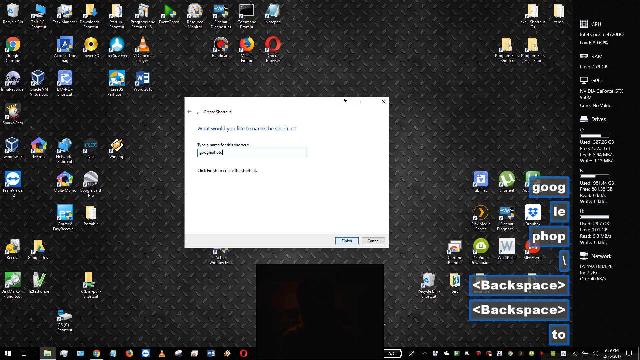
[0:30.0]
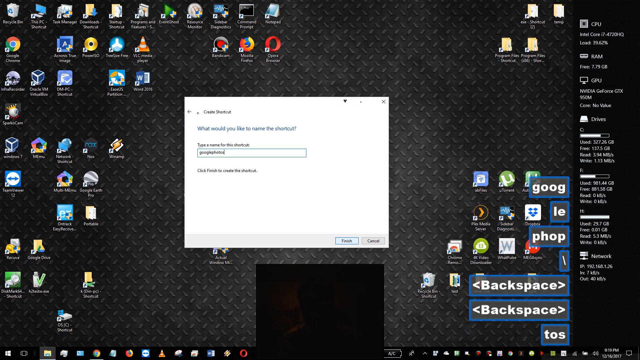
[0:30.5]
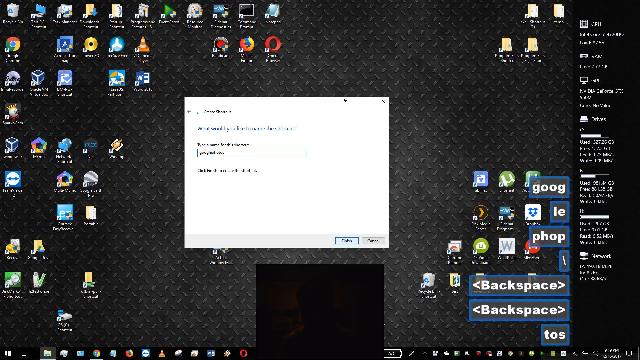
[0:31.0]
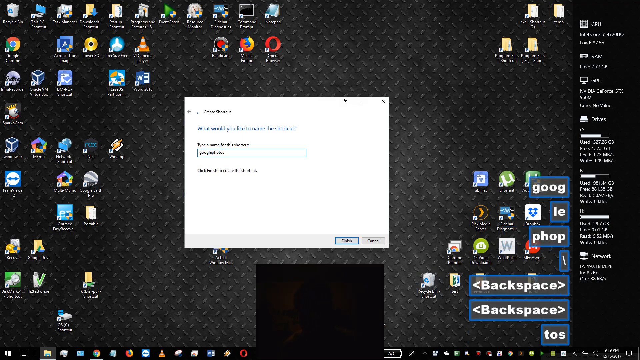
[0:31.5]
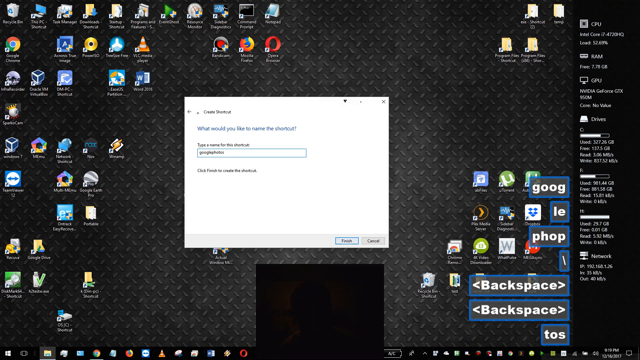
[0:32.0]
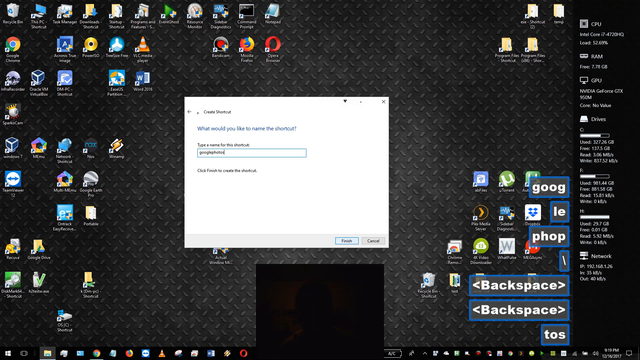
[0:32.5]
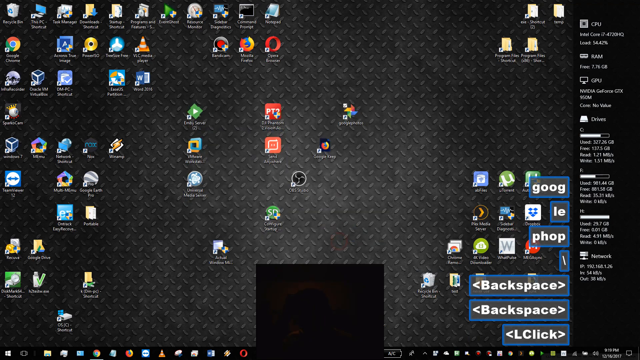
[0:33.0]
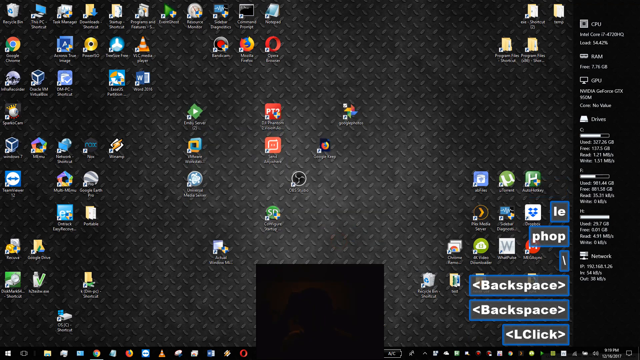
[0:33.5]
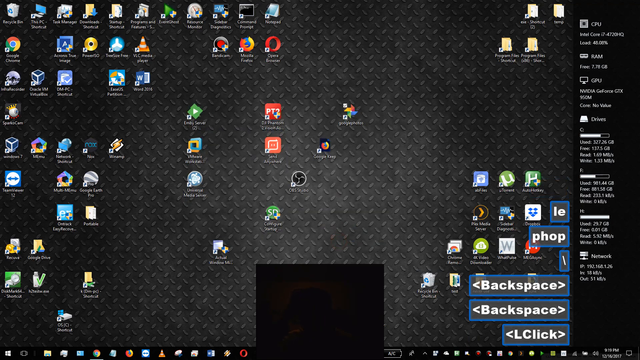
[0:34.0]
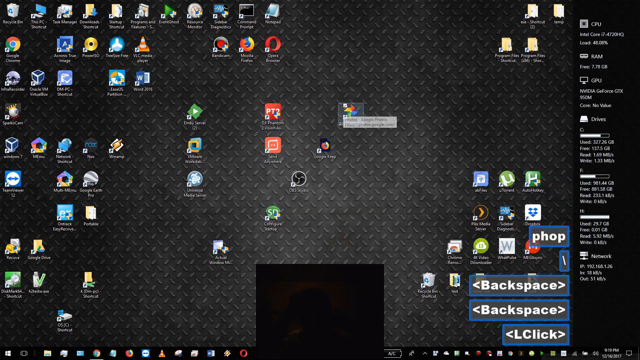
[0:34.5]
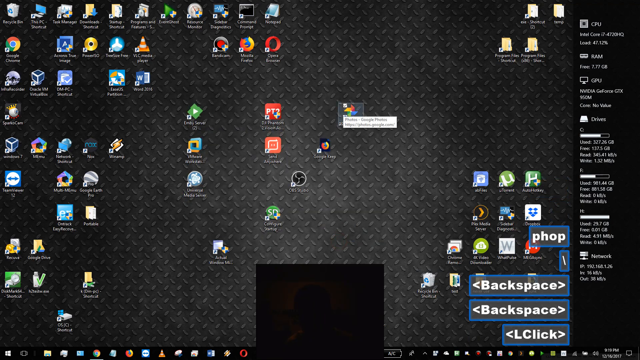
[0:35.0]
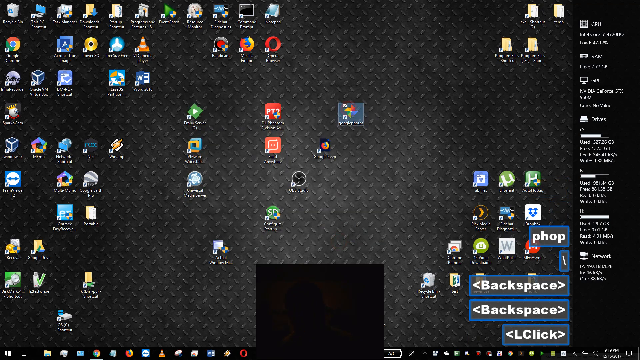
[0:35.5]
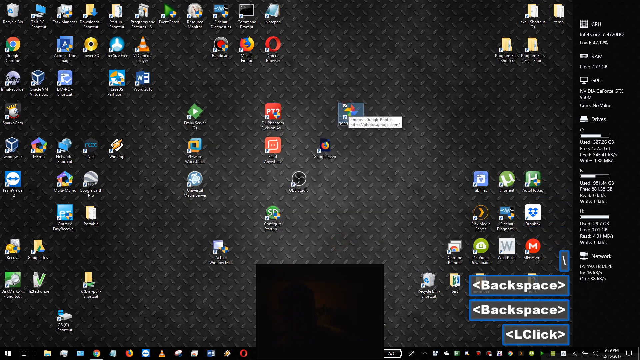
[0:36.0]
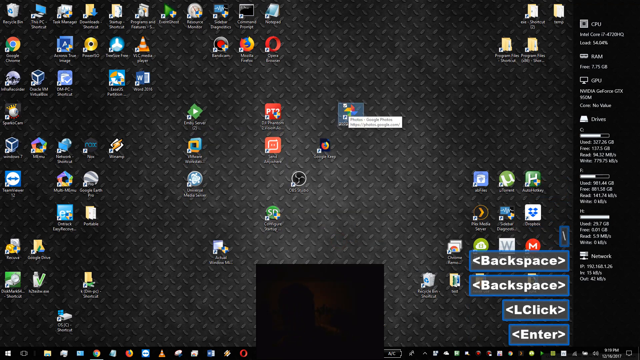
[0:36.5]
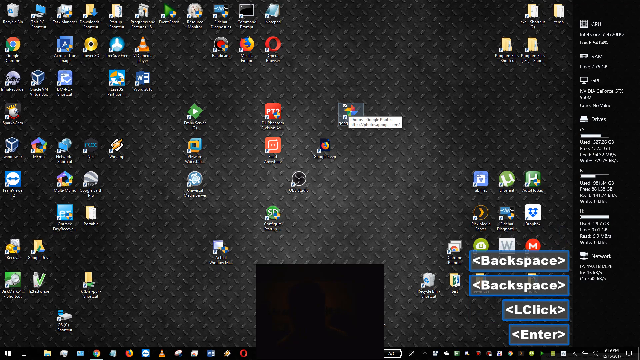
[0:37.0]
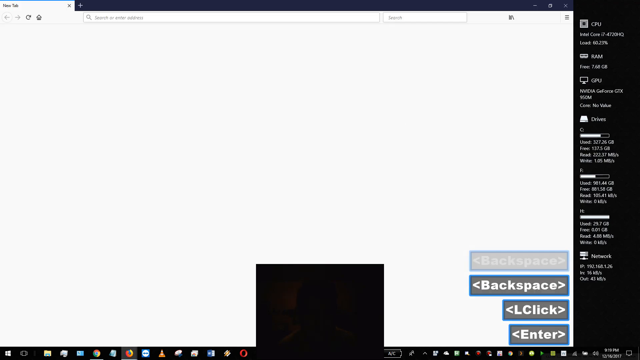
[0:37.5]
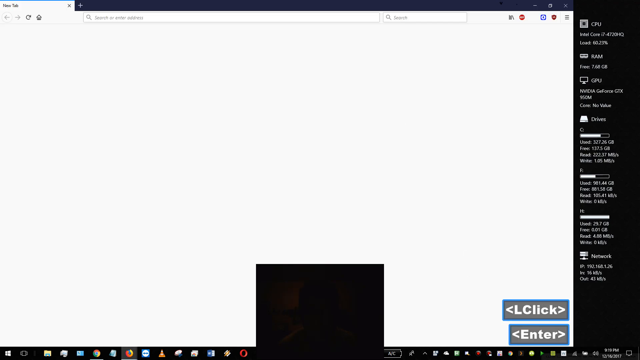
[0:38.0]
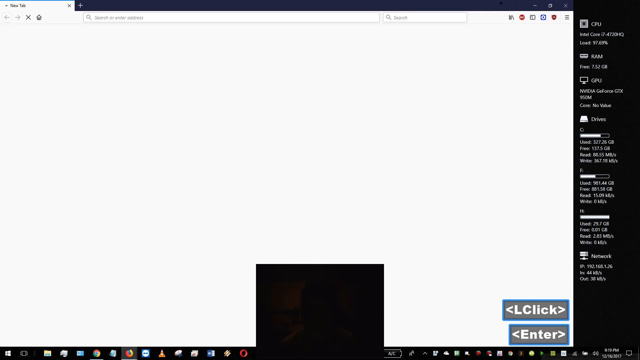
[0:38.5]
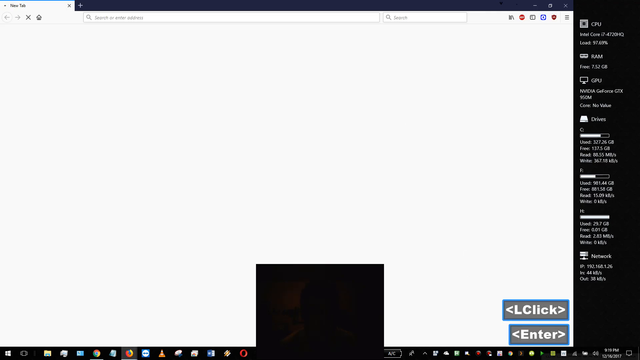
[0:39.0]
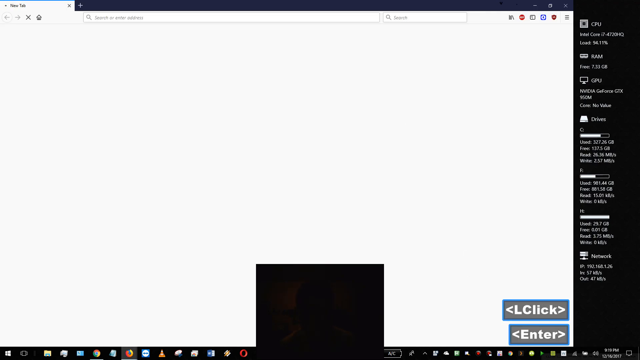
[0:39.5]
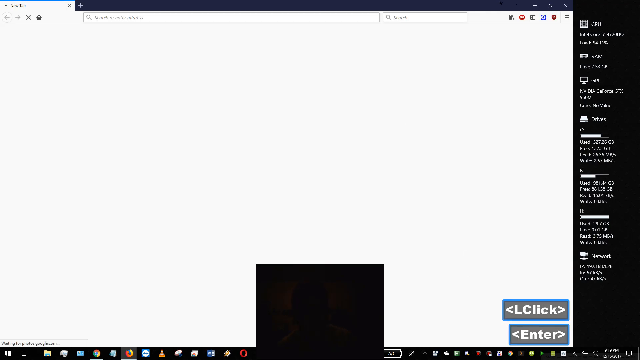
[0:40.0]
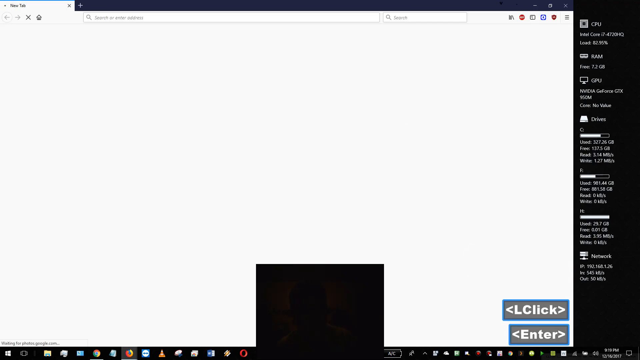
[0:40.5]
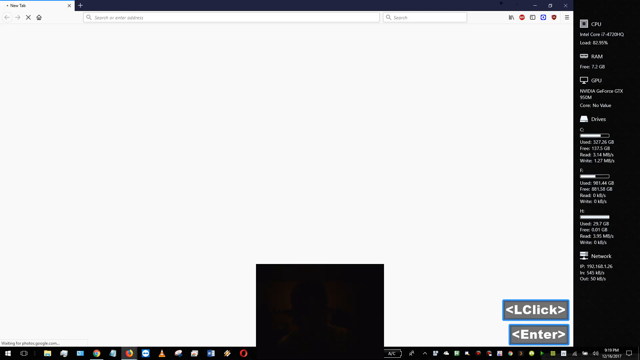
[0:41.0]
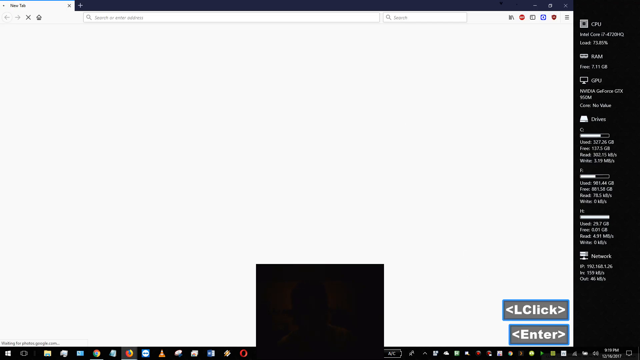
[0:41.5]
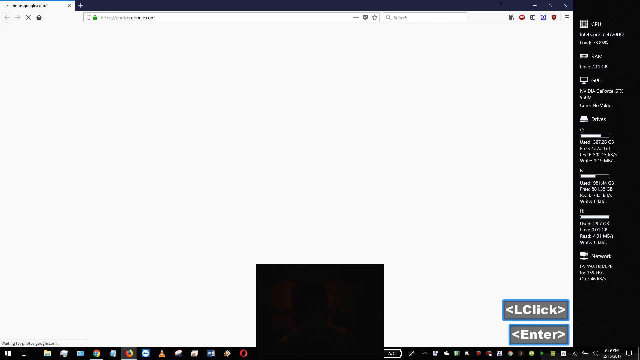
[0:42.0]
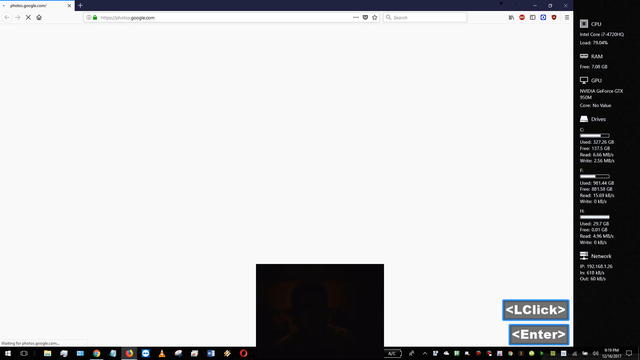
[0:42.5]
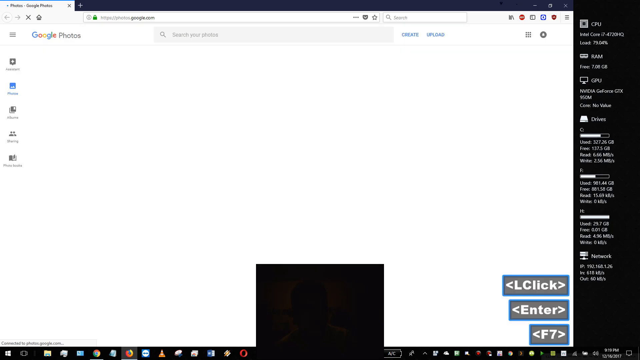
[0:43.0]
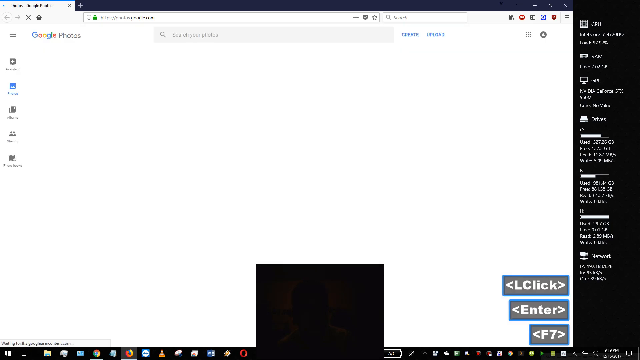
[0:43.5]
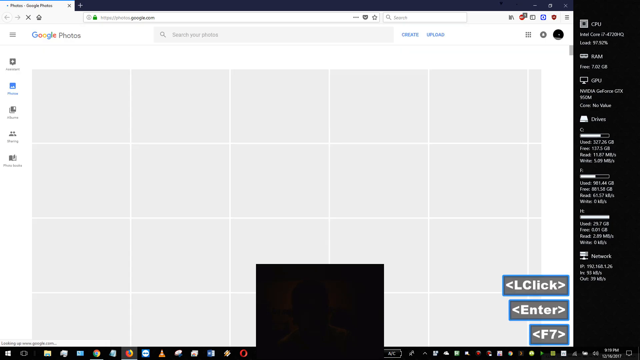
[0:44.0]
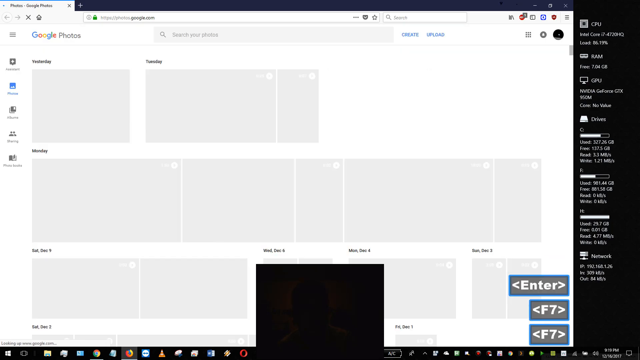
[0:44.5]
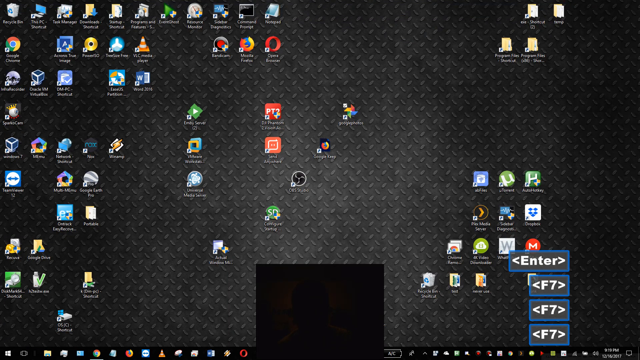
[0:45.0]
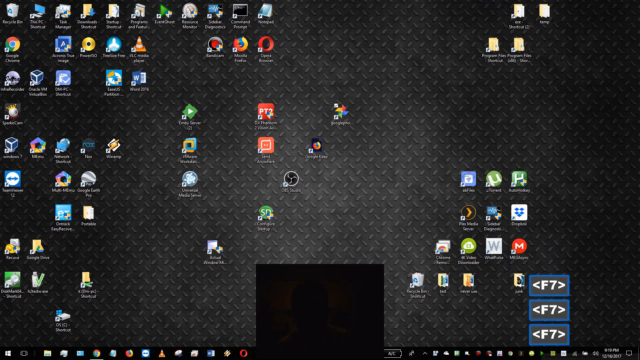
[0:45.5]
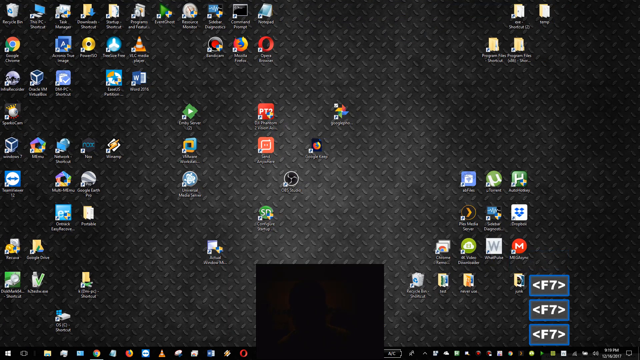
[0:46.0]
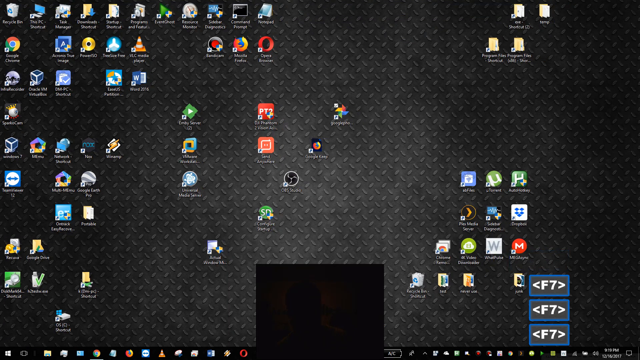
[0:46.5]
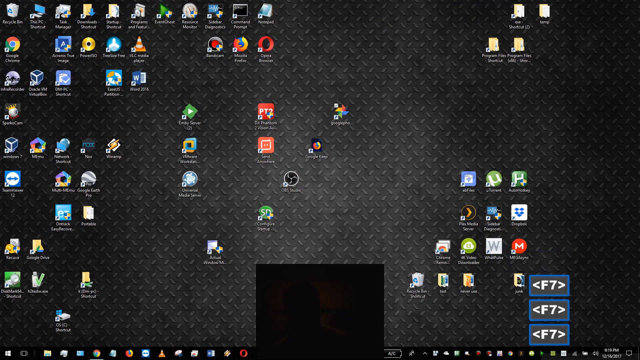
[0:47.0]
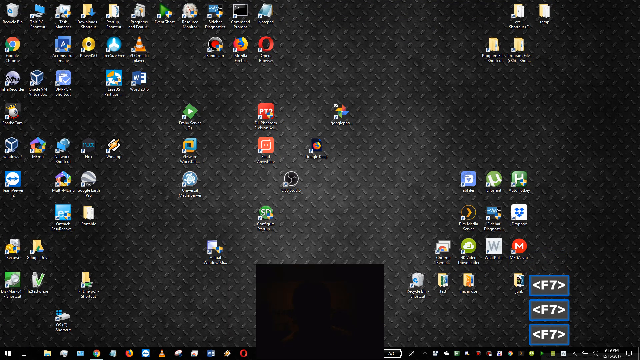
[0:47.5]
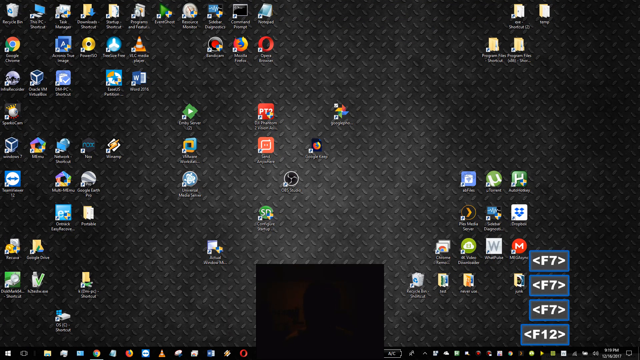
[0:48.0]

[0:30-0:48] The desktop with the black background that looks like tire tread and icons all over the screen remains. A new shortcut has been created: "PHOP" pops up as text on the right, and an icon for the new shortcut is near the middle of the screen. The cursor goes to the shortcut and clicks it. Continuous text in the lower right corner reads click, then "PHOP," then click, then enter. A Google Photos folder opens after the shortcut is clicked. Then "F7, F7, F7" appears in the lower right and the Google Photos folder closes. The new icon remains in the middle of the screen along with all the other icons that take up all of the space.